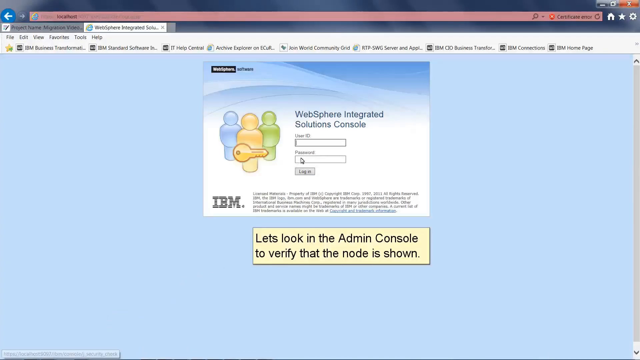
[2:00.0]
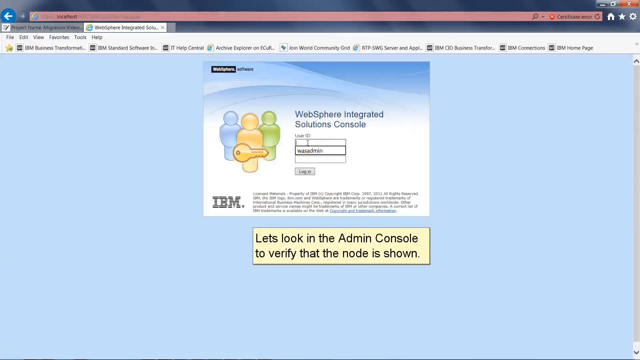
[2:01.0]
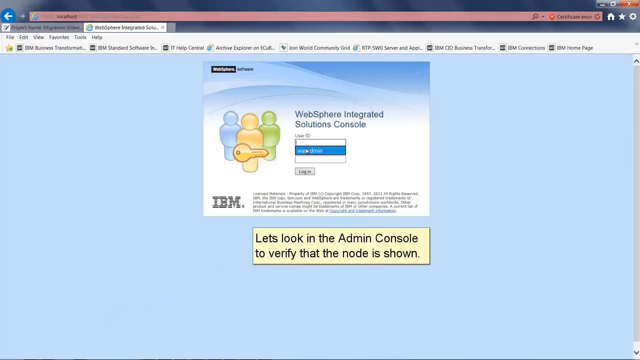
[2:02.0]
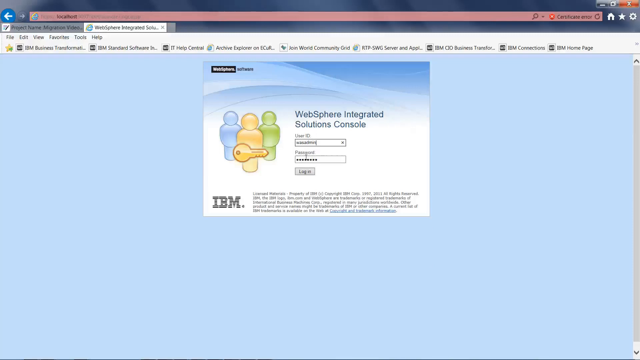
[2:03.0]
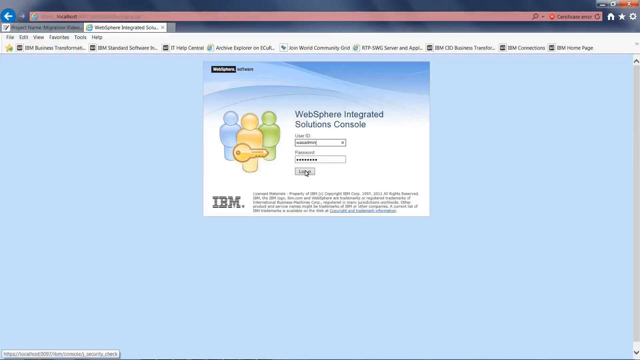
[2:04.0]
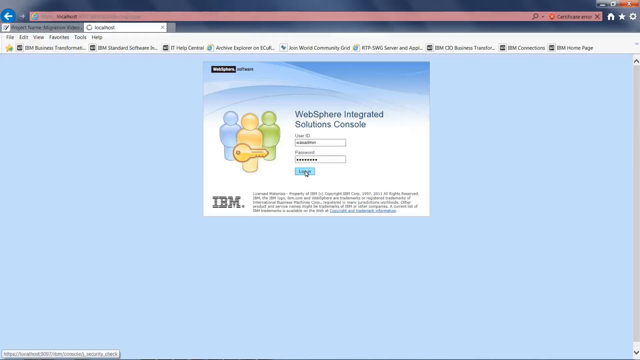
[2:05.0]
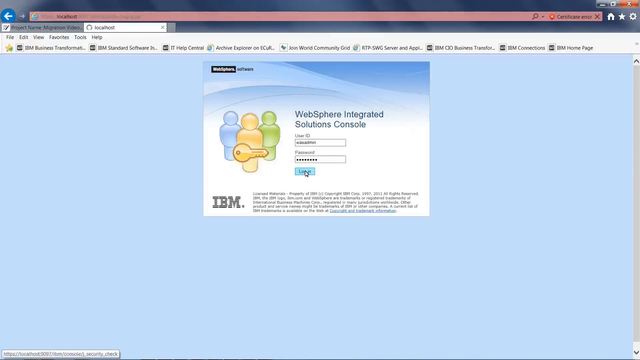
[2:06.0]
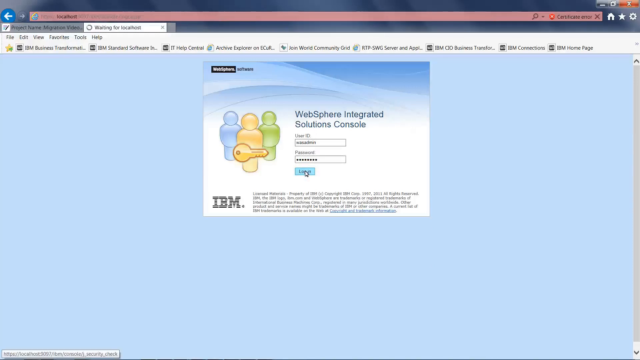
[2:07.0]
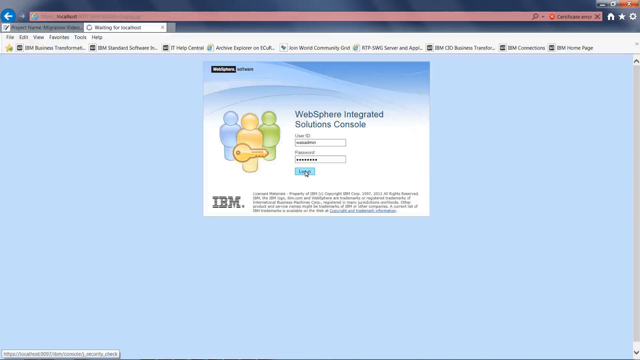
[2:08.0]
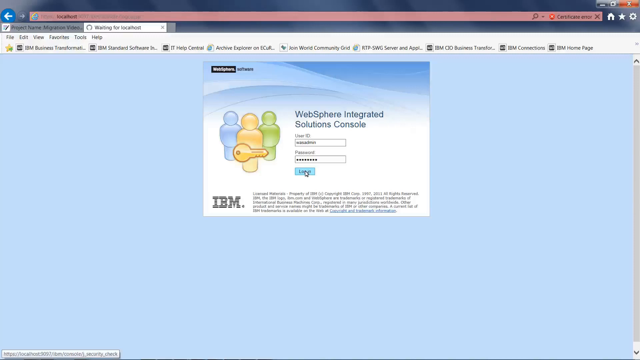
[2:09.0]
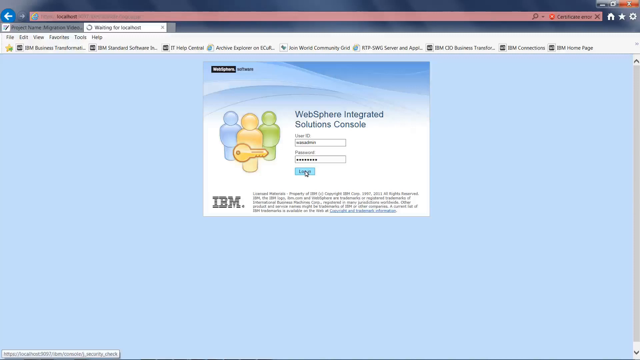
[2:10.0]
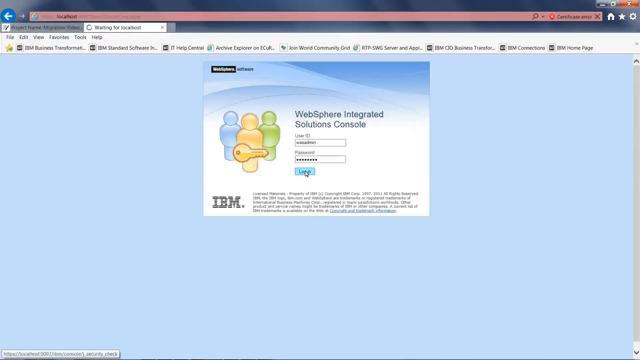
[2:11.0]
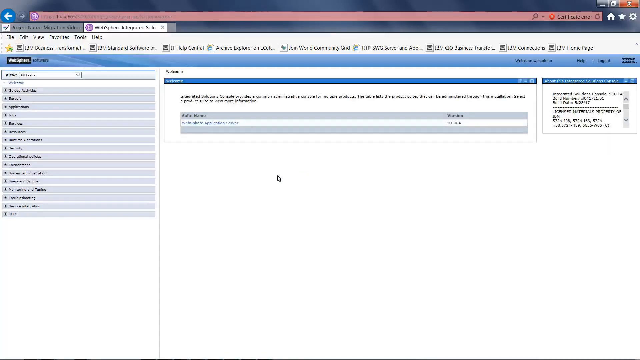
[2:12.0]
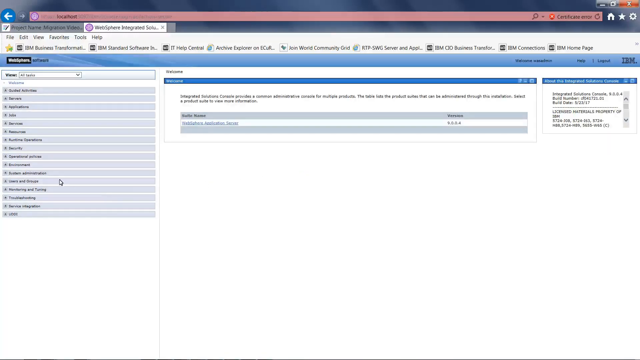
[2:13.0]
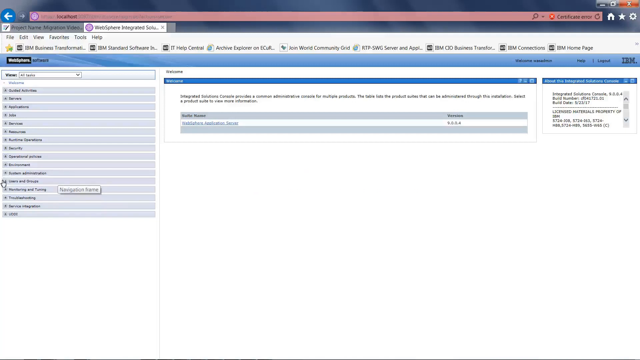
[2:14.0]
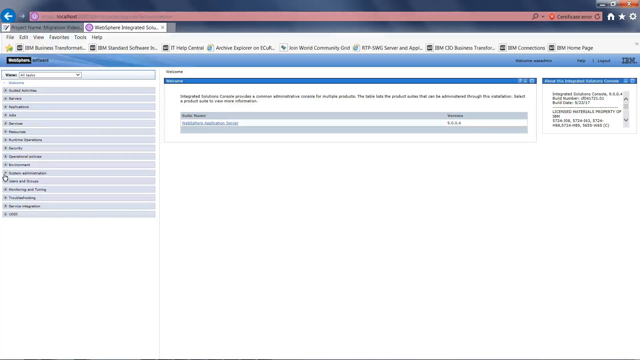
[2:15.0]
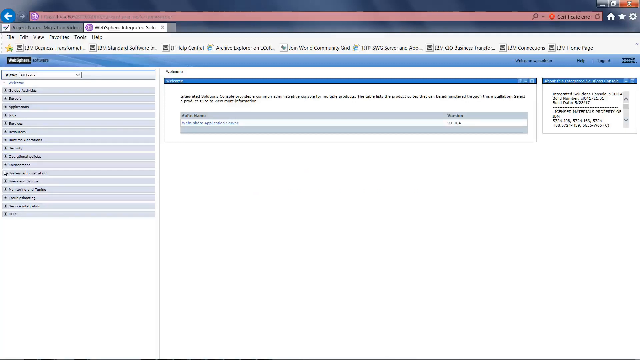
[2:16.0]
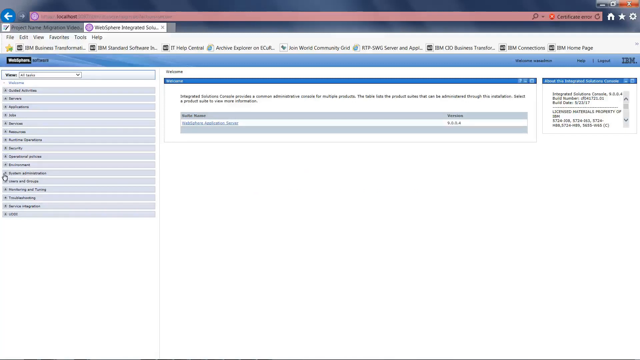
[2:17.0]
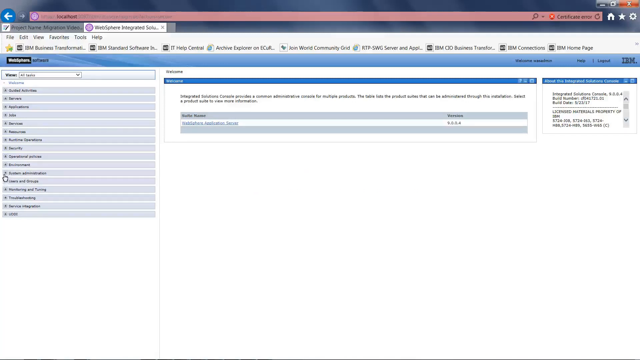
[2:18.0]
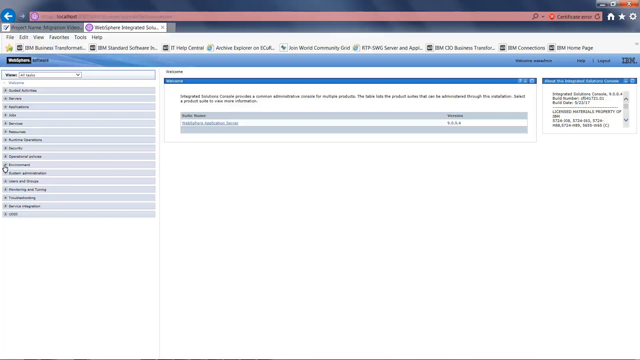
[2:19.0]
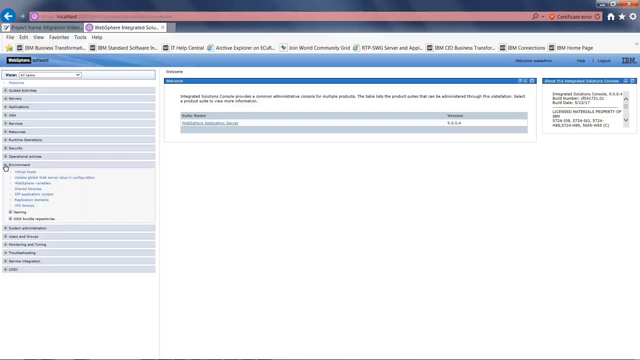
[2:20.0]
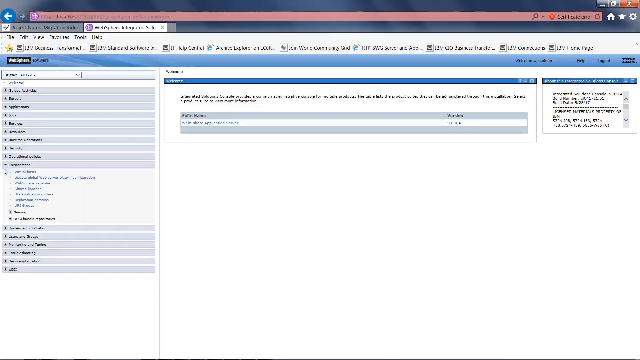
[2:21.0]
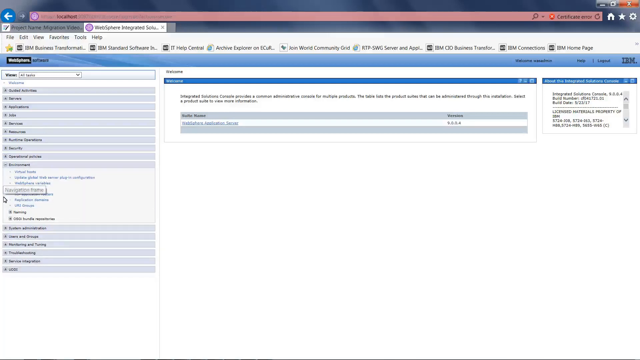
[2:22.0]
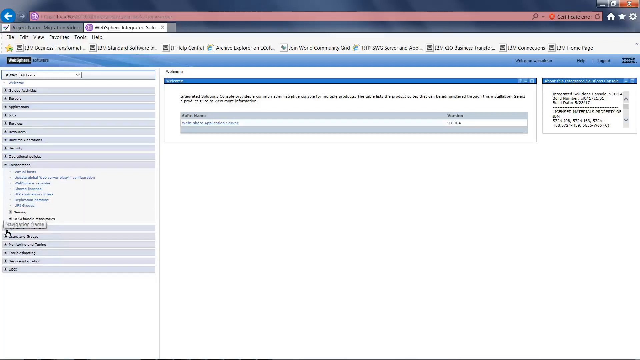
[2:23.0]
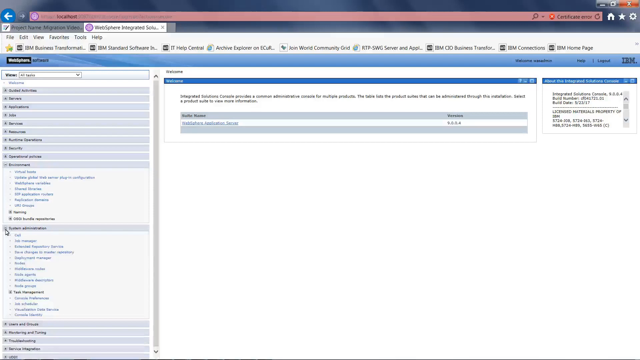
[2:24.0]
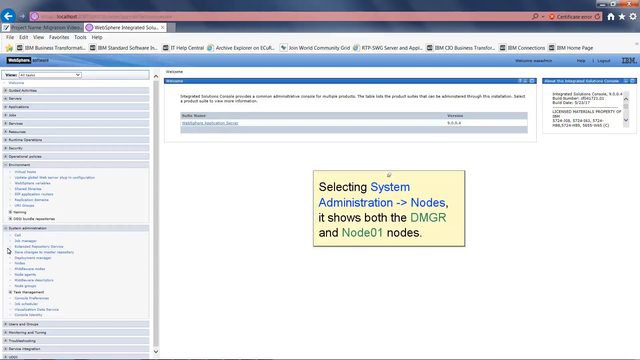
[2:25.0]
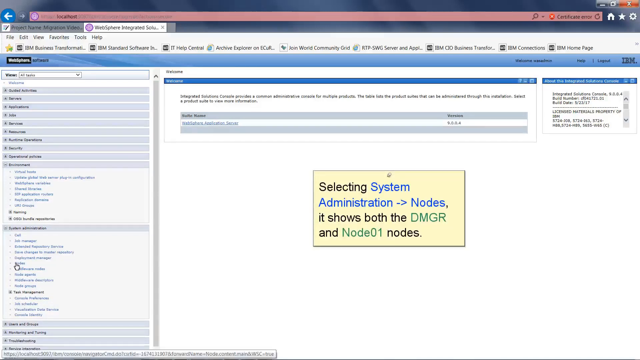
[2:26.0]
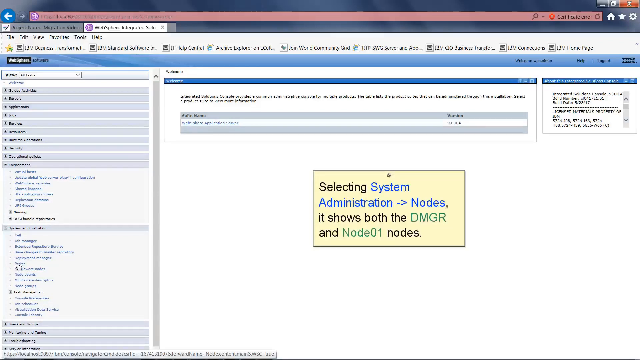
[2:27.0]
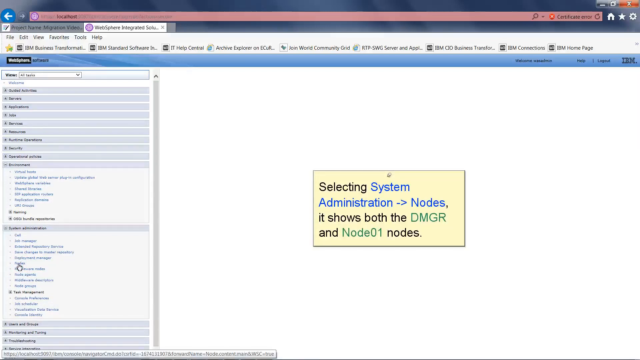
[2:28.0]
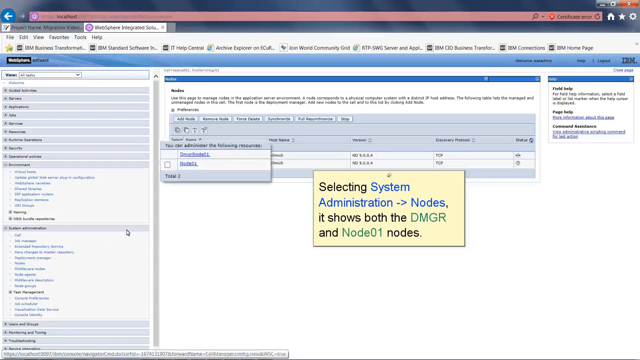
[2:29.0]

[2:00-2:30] The browser is open to a login page for the WebSphere Integrated Solutions Console, with a light yellow rectangular box toward the bottom of the screen reading "let's look in the admin console to verify that the node is shown." The user clicks the text input box under user ID, where a name is already saved; selecting it populates the user ID and password, and the user clicks the Login button. A page loads that looks like a dashboard, with kind of a welcome message in the top center, a panel with a long list of options on the left side, and a smaller, narrow frame on the right side that may be giving some kind of news updates. The mouse moves to the left panel and hovers over some of the options, then clicks one drop-down menu, expanding a list of options, and then clicks the next drop-down menu, which shows another nest of options. A yellow box pops up reading "Selecting System Administration" followed by a right arrow and "Nodes, it shows both the DMGR and Node 01 nodes." The user clicks what looks like Nodes in the left-hand panel, and the main center page changes to show "Nodes" on top with a table listing two entries across five columns. In the first column, labeled "you can administer the following resources," the two options are magnified while the user hovers the mouse over them.